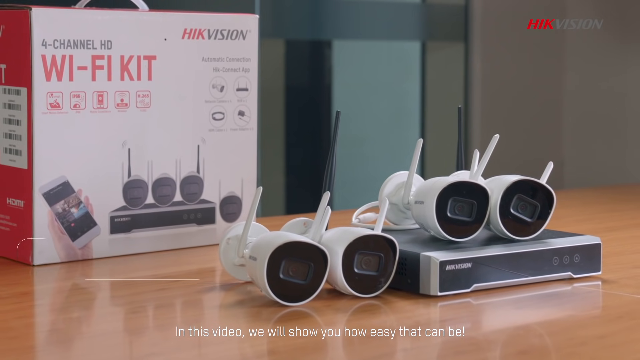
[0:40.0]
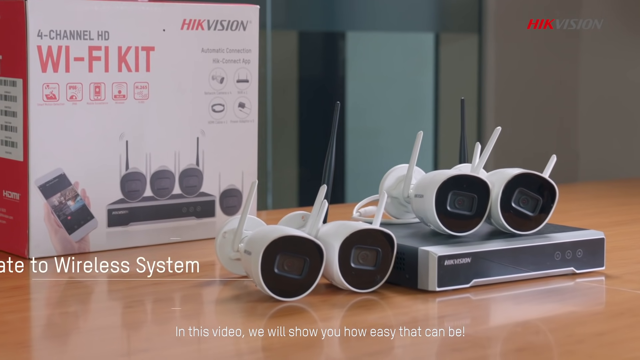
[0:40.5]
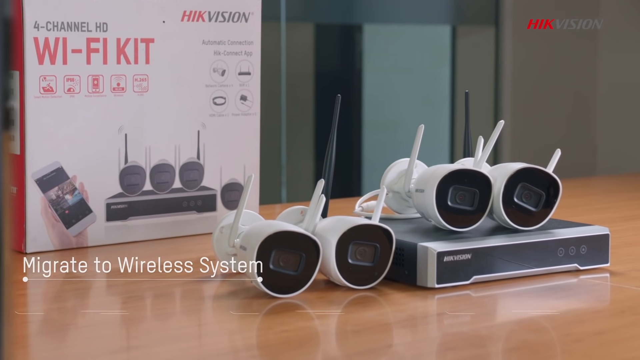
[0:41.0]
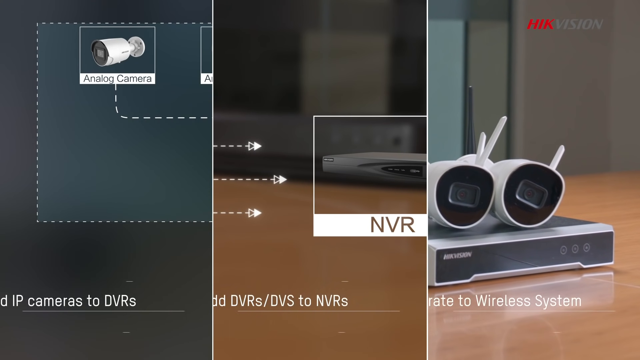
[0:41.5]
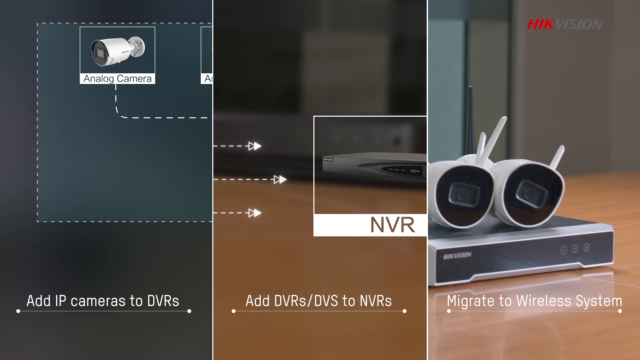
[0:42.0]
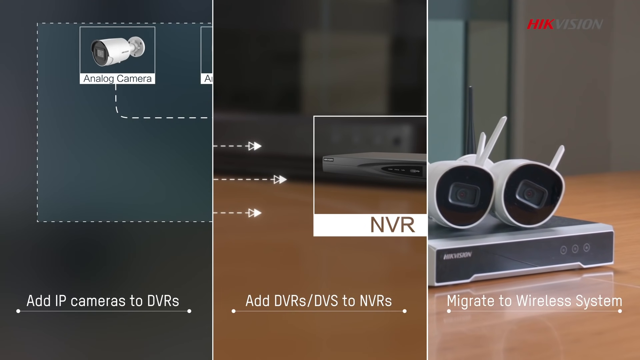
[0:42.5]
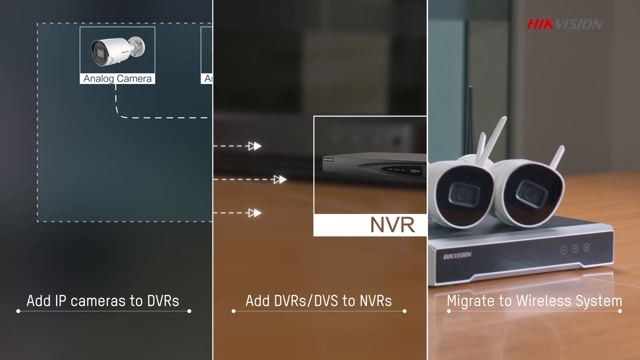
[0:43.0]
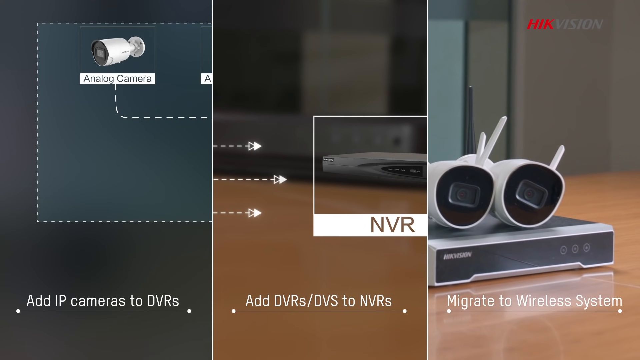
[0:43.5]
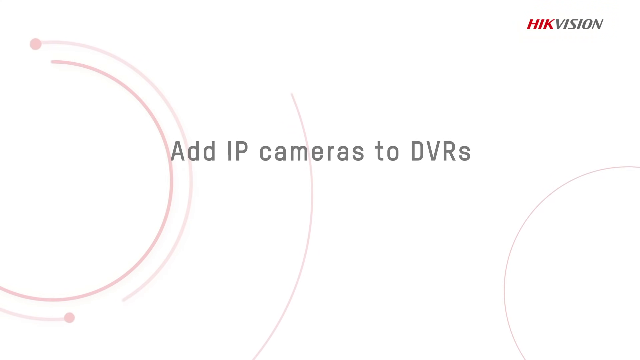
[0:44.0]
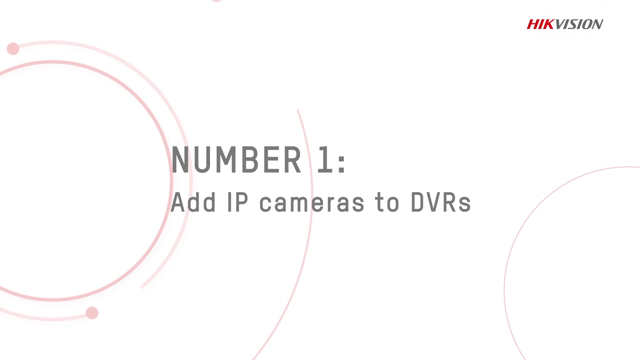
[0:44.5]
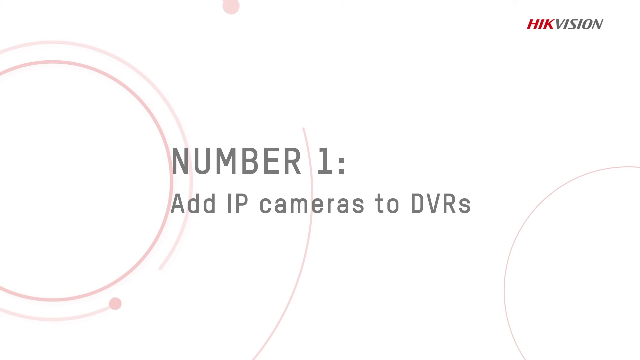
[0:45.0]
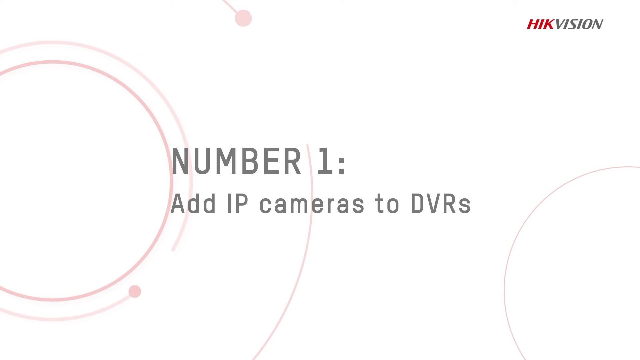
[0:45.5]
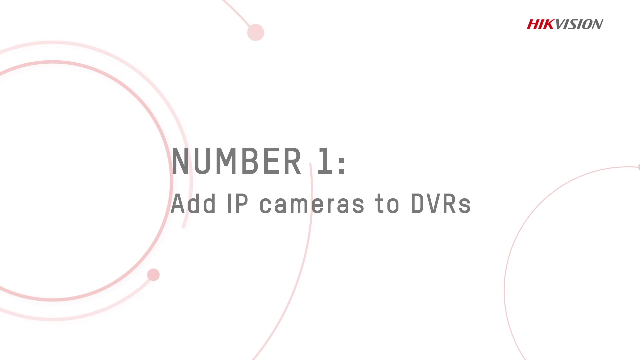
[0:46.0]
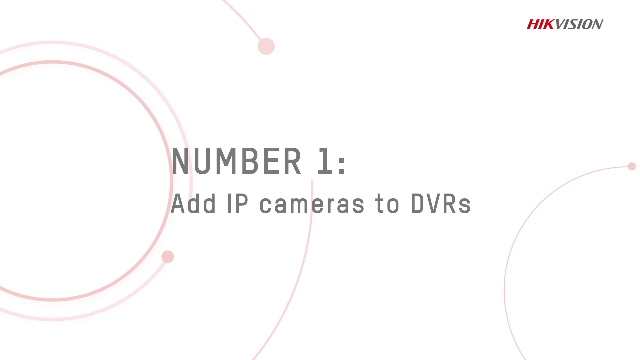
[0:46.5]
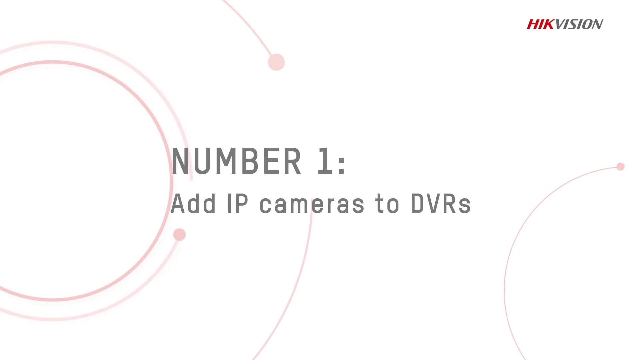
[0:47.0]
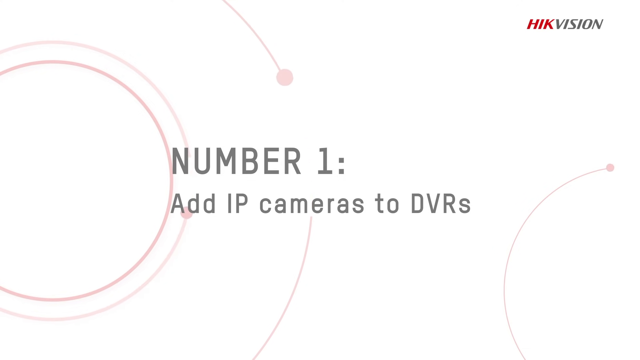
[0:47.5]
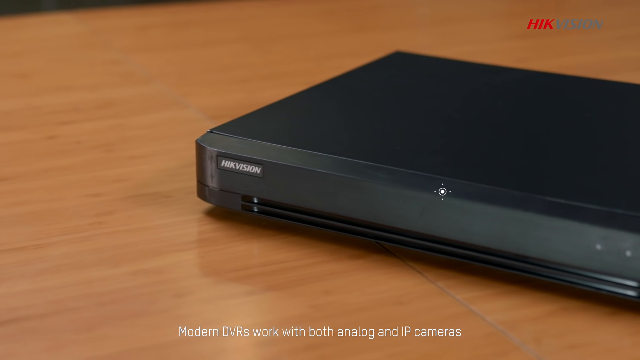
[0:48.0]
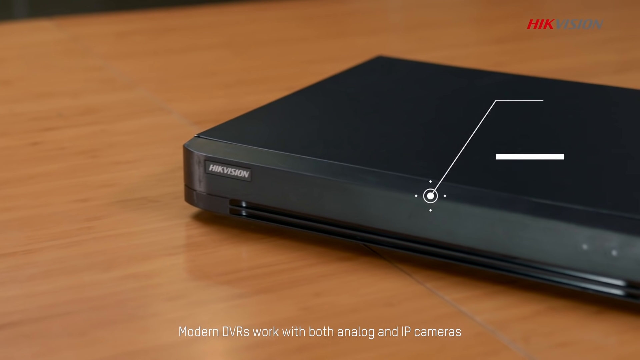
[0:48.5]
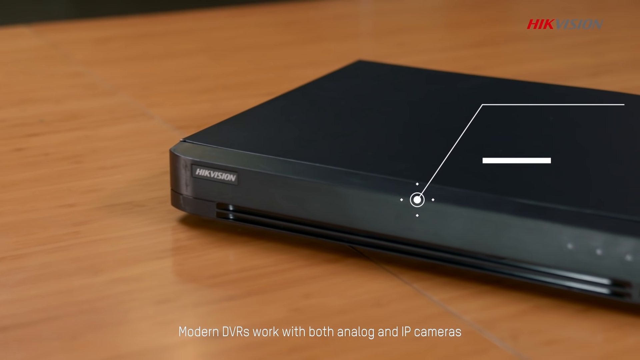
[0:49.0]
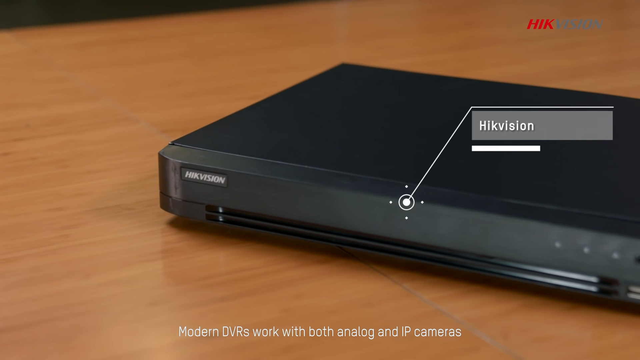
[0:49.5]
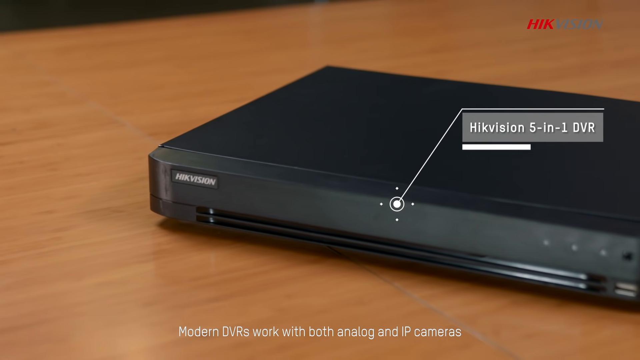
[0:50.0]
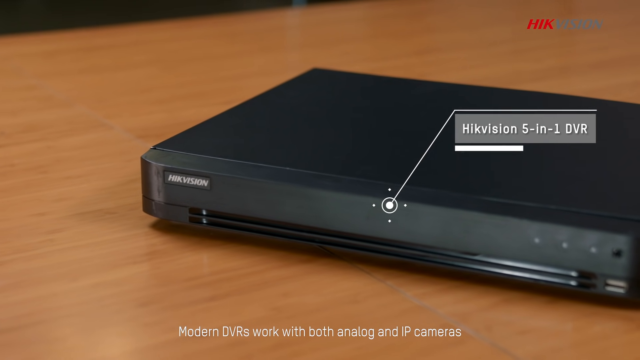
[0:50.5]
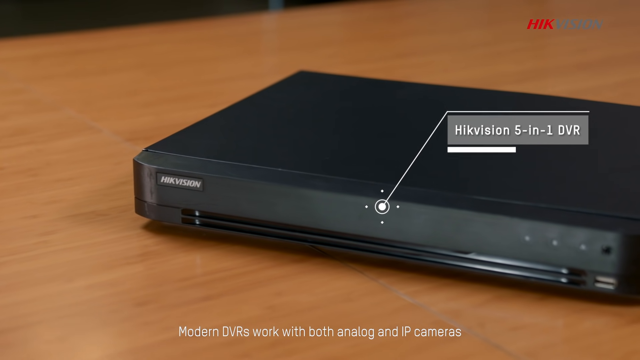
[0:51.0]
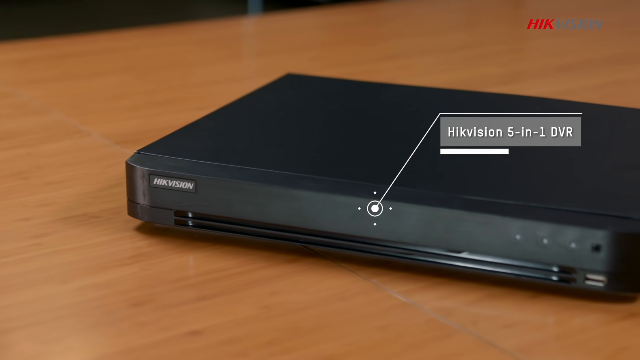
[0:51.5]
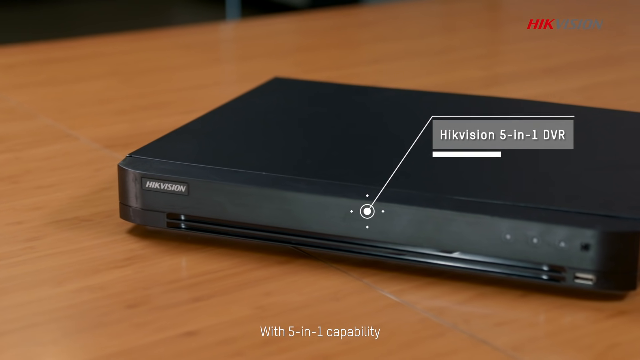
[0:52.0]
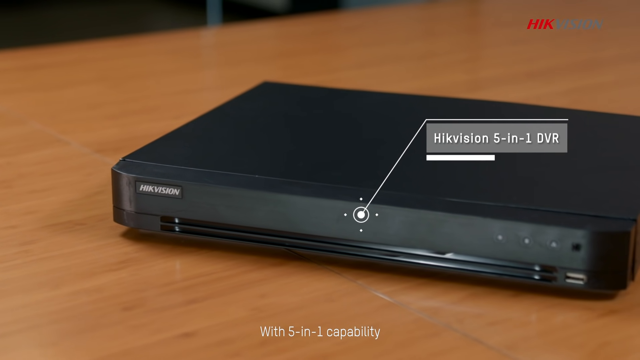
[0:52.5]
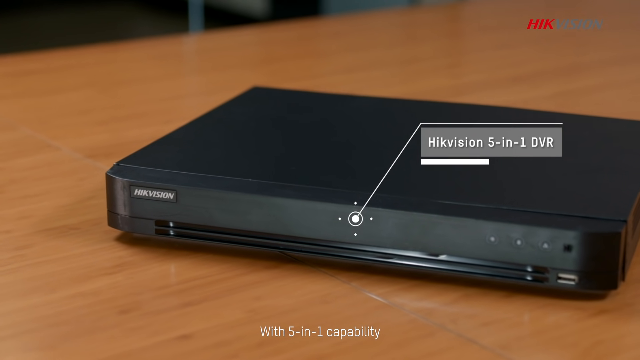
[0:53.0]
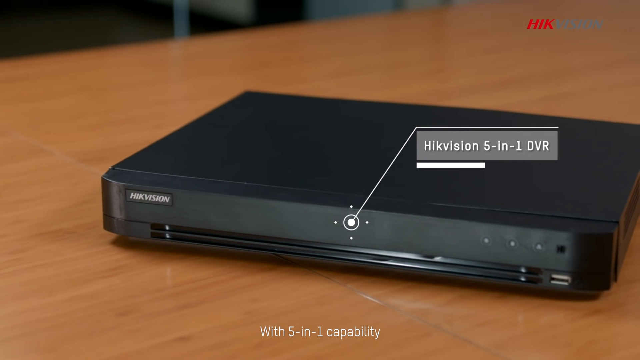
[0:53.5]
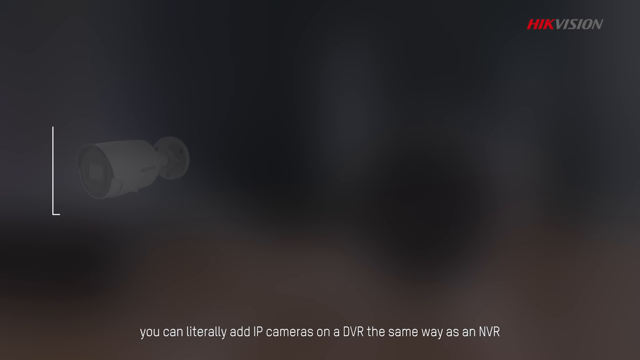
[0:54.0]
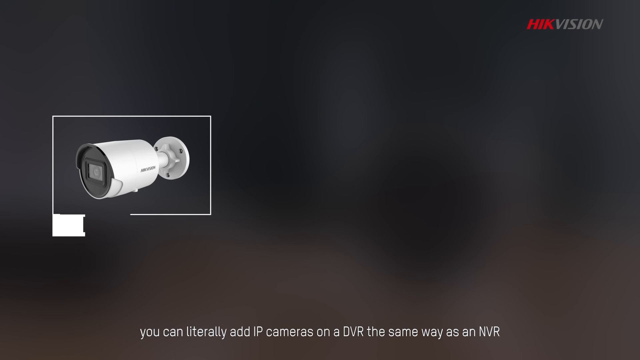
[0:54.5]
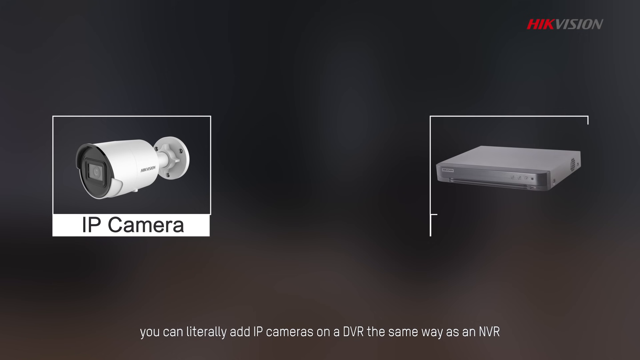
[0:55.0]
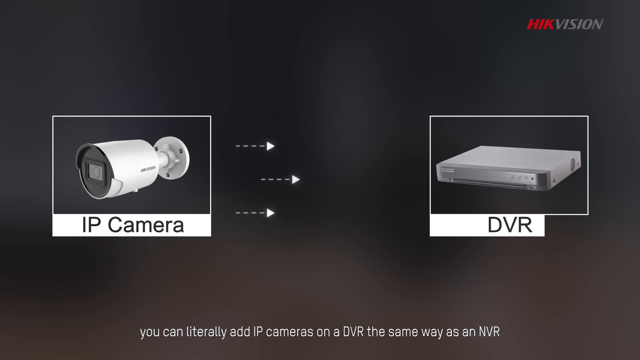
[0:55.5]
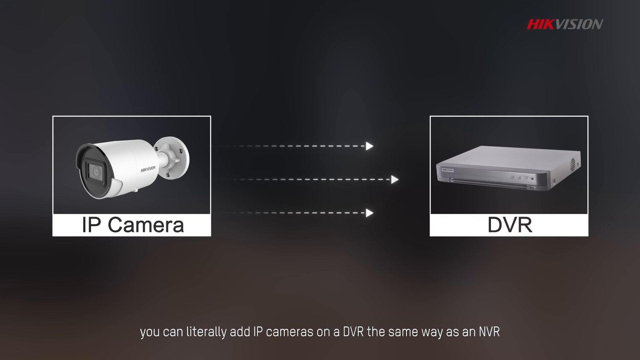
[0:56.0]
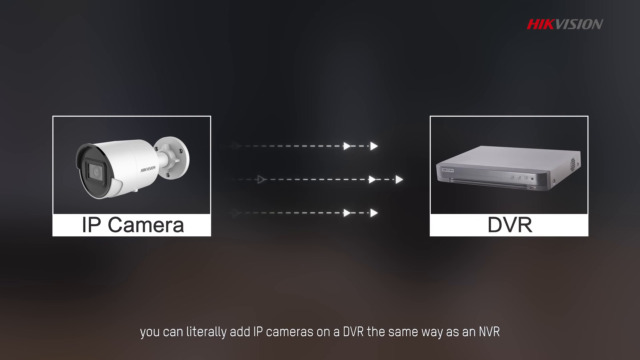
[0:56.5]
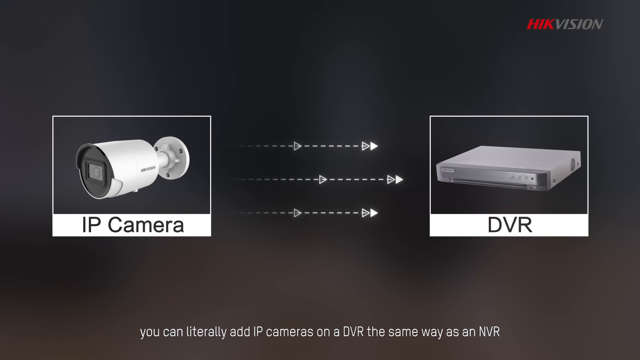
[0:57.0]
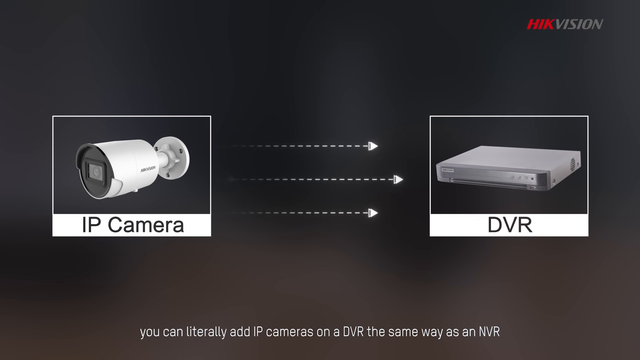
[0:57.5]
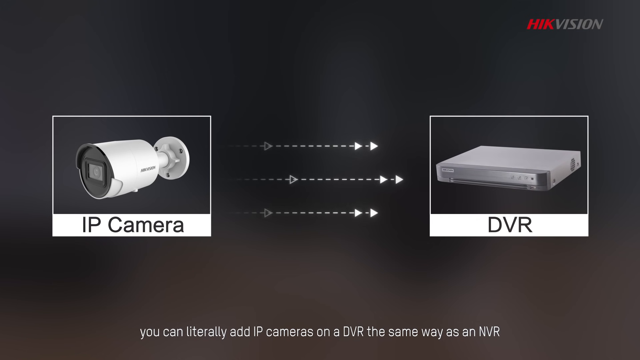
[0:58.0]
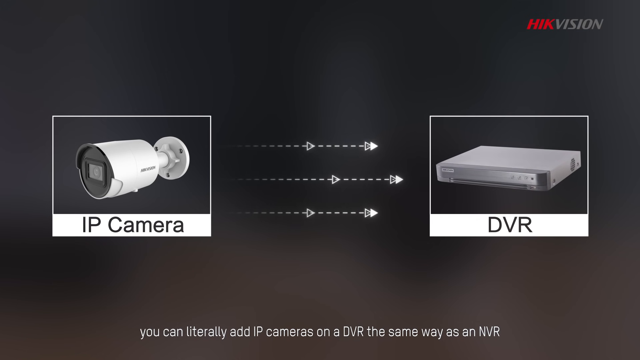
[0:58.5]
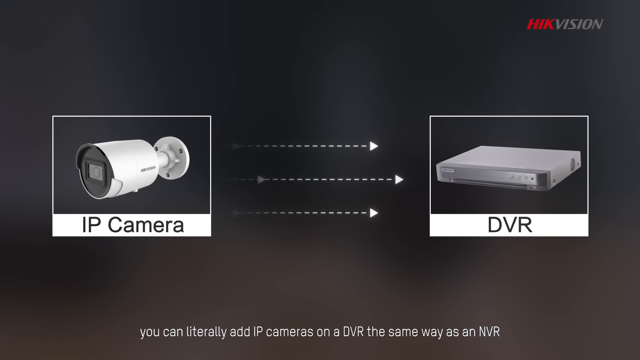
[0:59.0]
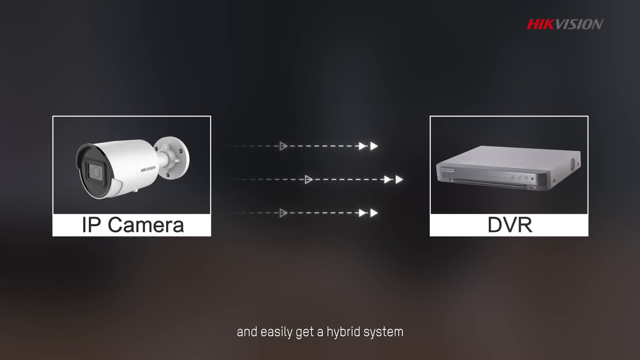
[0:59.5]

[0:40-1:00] The HIK Vision camera system is shown. In the background on the left is the four-channel HD Wi-Fi kit in its box; the box shows the receiver, four cameras, and a hand holding a smartphone with a picture of what it is surveilling. In the foreground on a light brown table is the receiver, a rectangular box, with two of the cameras on top of it and two to its left. The cameras are roughly circular, not perfectly round, with a more rectangular lens part, and all face toward the viewpoint. The background appears to be an indoor space like an office, with beige and gray walls.